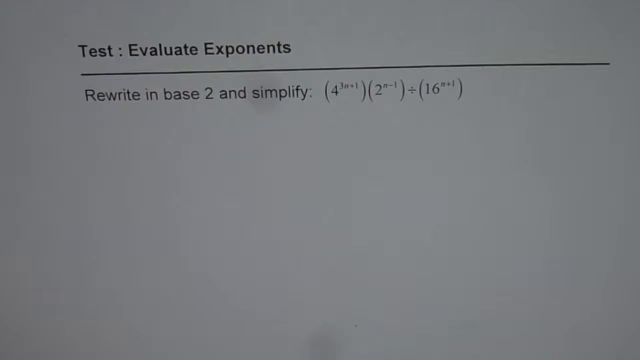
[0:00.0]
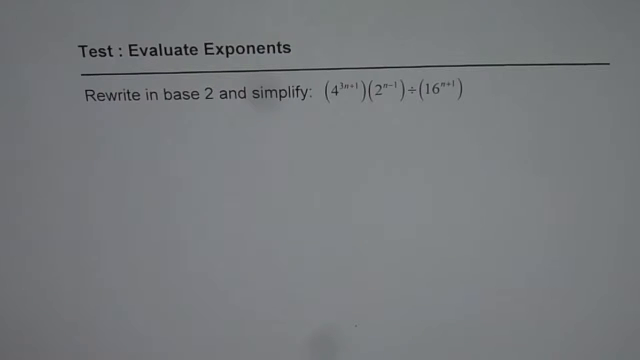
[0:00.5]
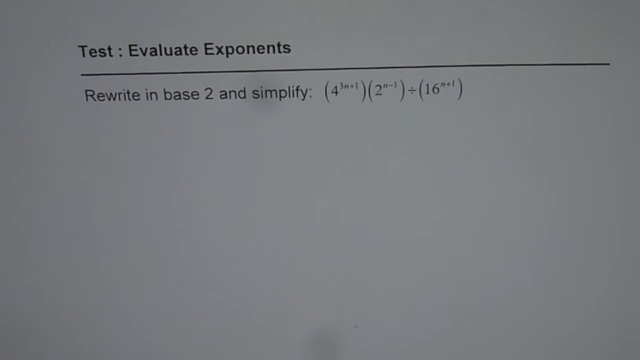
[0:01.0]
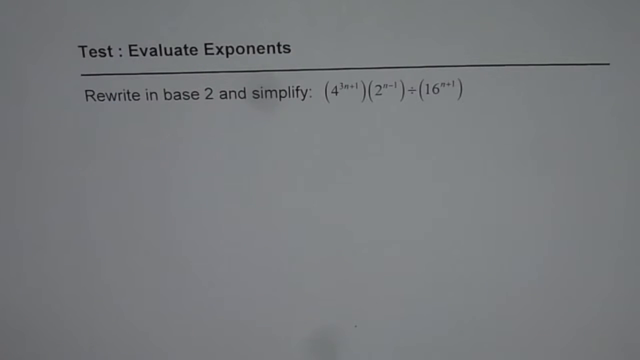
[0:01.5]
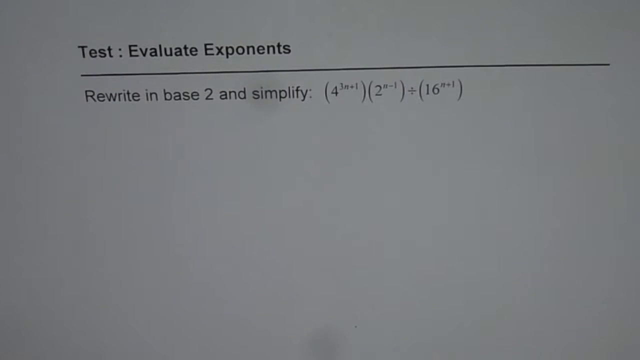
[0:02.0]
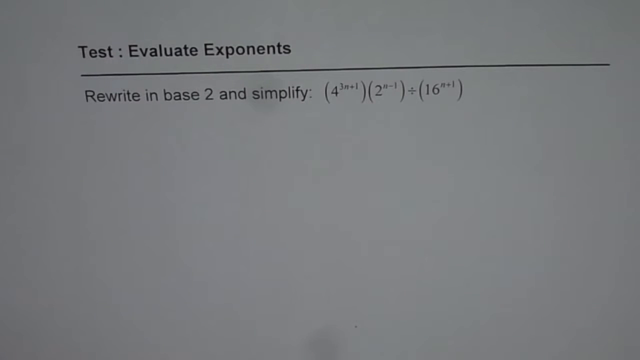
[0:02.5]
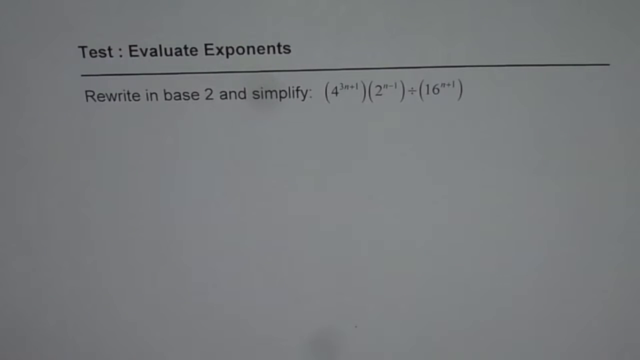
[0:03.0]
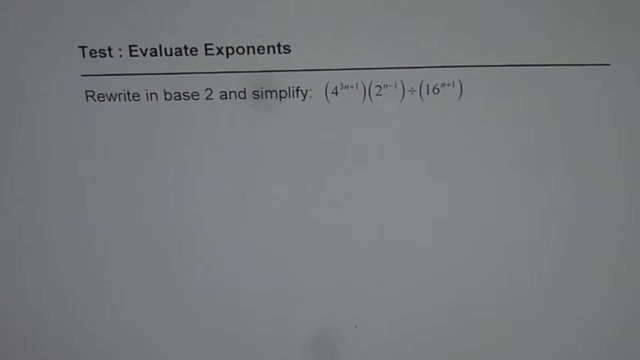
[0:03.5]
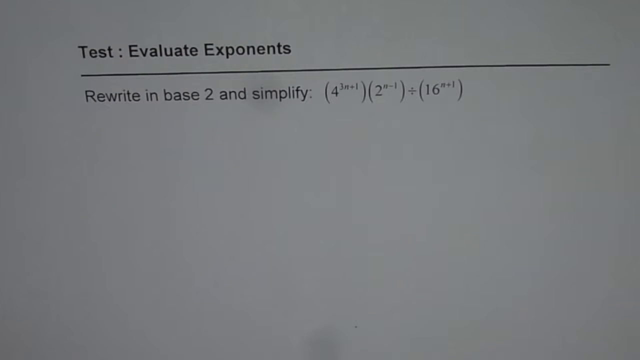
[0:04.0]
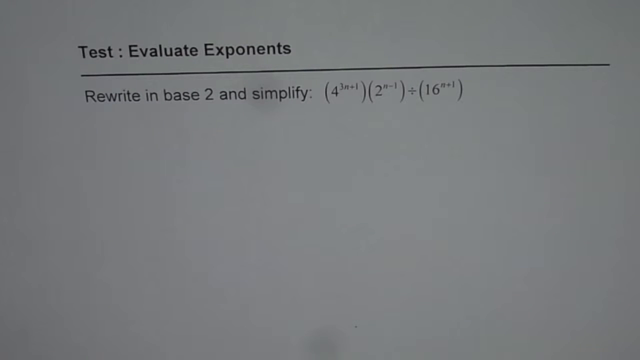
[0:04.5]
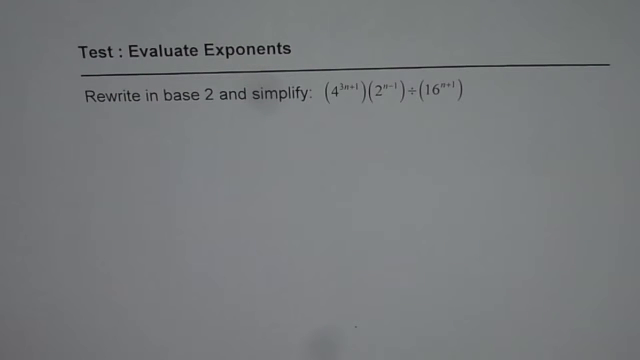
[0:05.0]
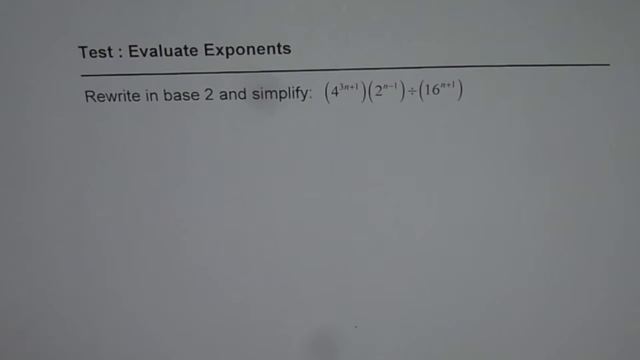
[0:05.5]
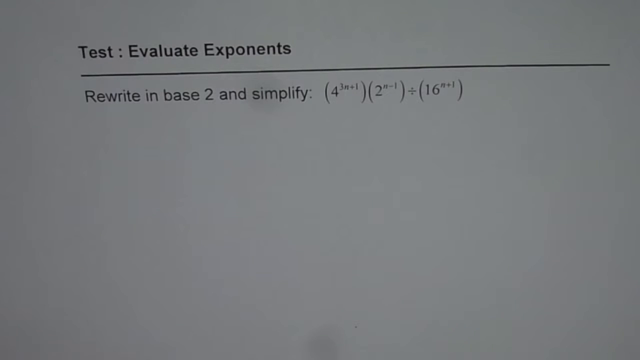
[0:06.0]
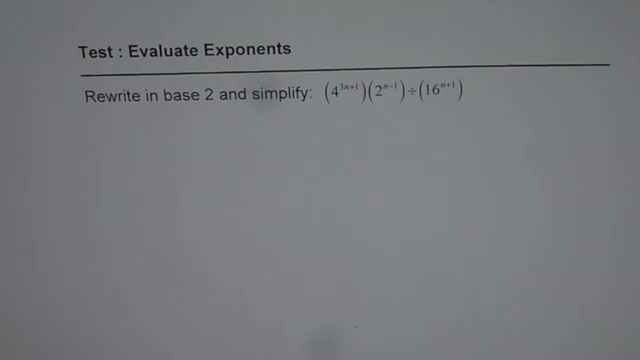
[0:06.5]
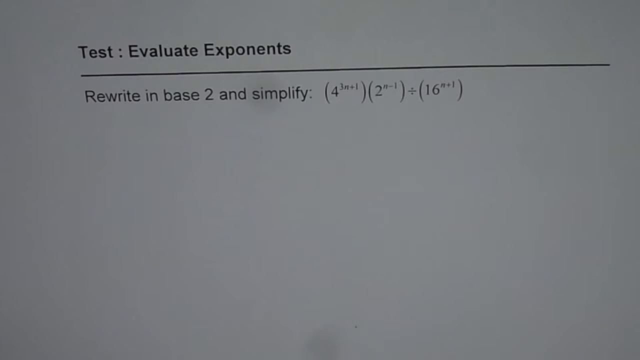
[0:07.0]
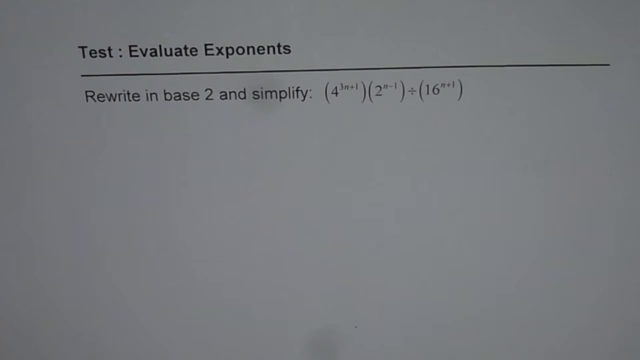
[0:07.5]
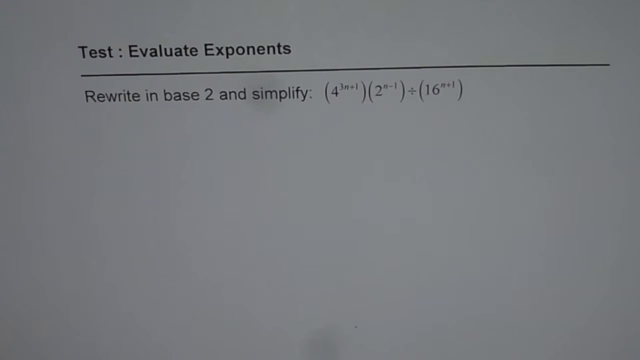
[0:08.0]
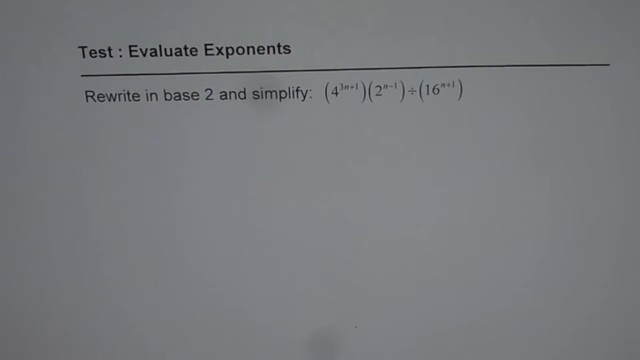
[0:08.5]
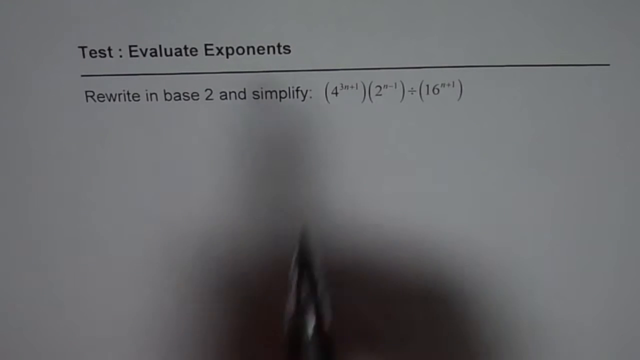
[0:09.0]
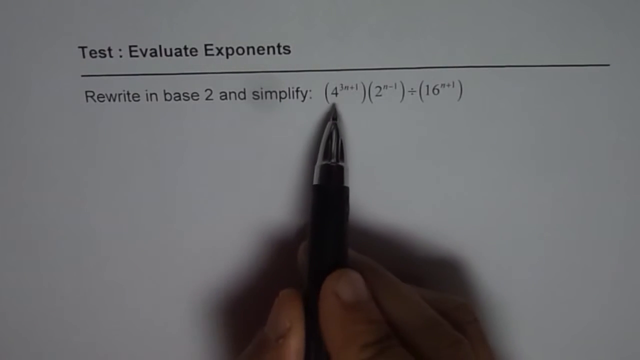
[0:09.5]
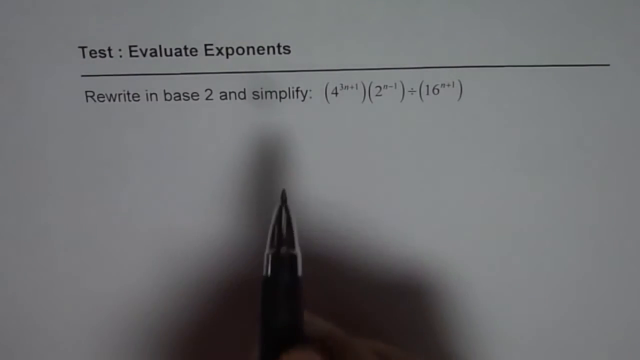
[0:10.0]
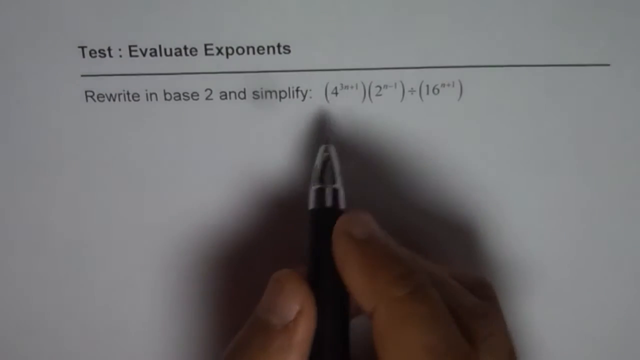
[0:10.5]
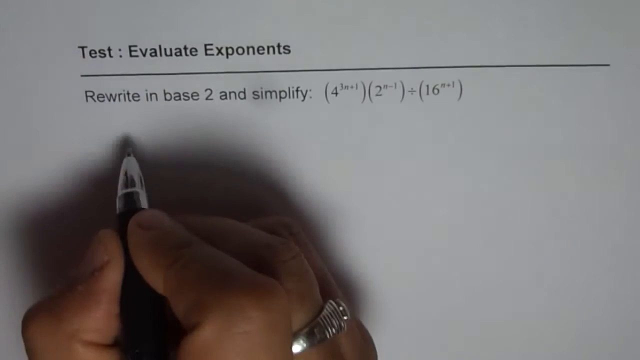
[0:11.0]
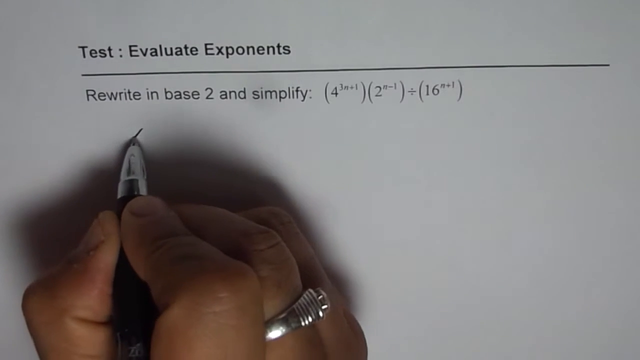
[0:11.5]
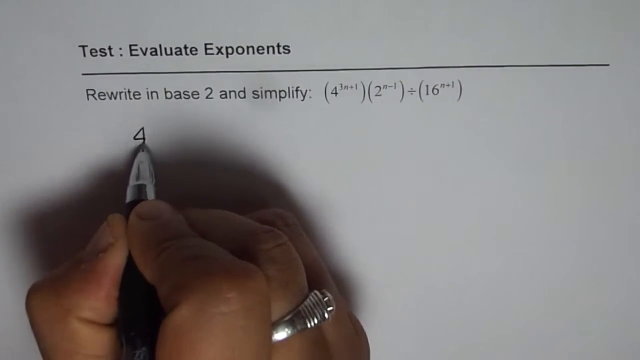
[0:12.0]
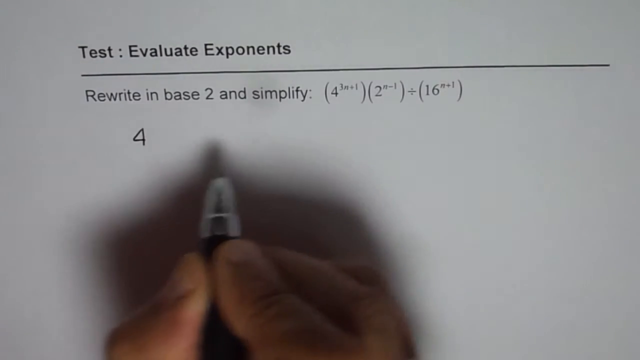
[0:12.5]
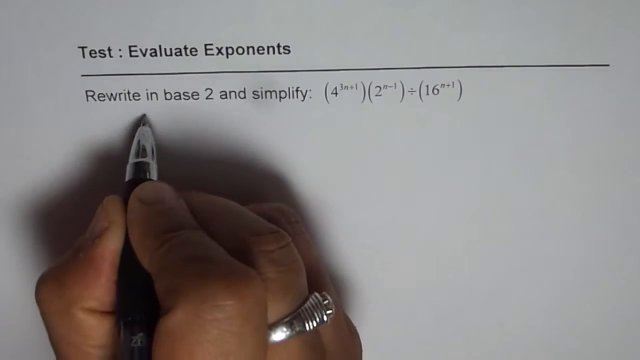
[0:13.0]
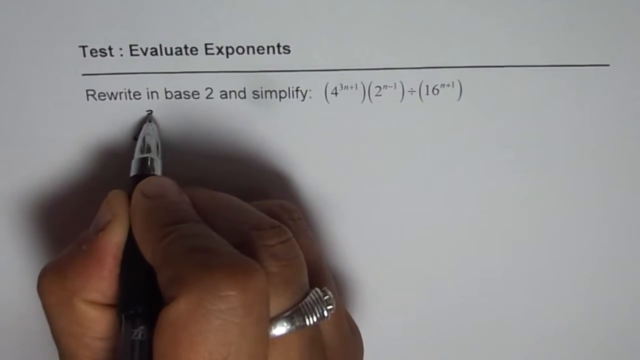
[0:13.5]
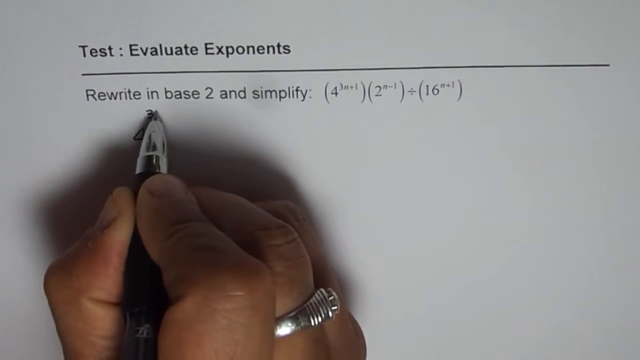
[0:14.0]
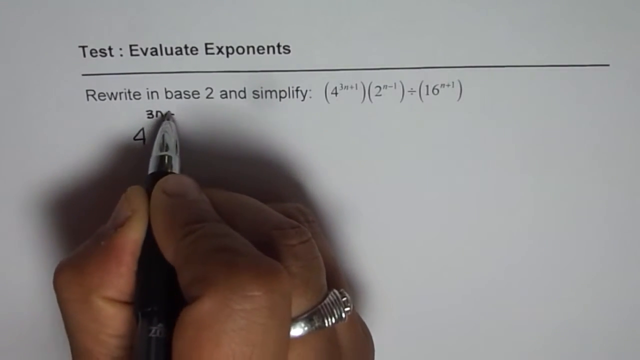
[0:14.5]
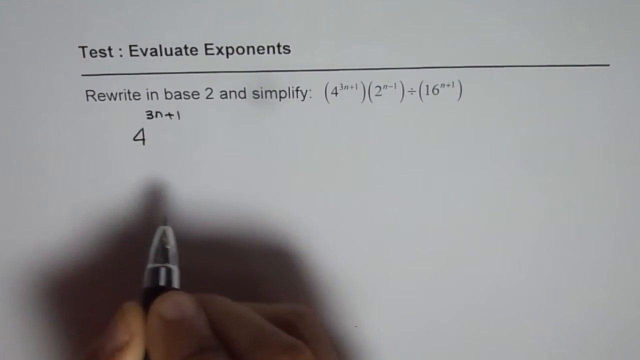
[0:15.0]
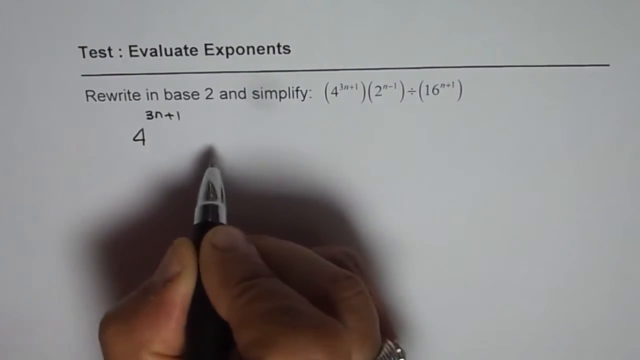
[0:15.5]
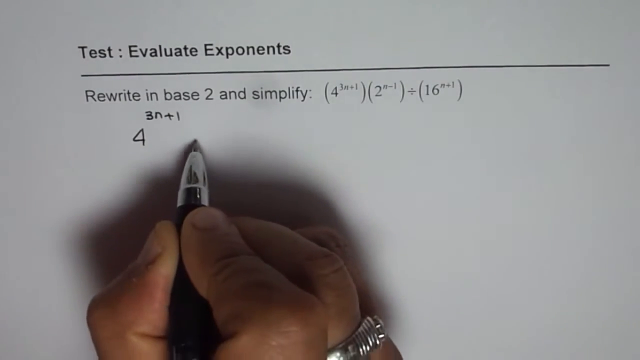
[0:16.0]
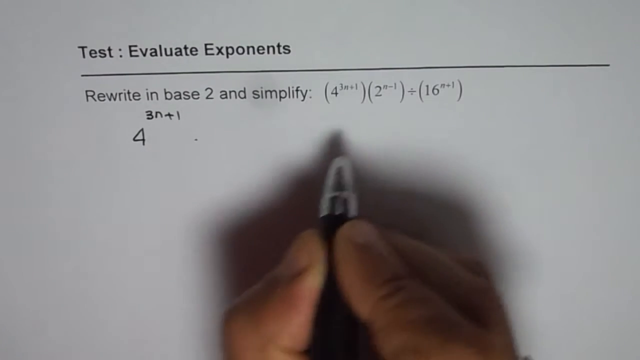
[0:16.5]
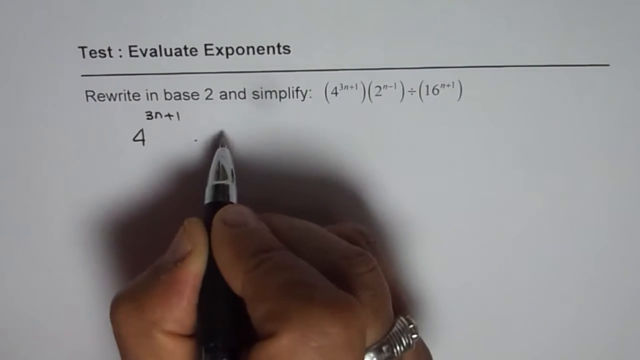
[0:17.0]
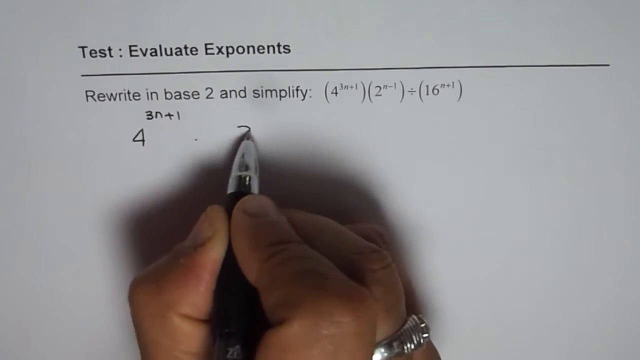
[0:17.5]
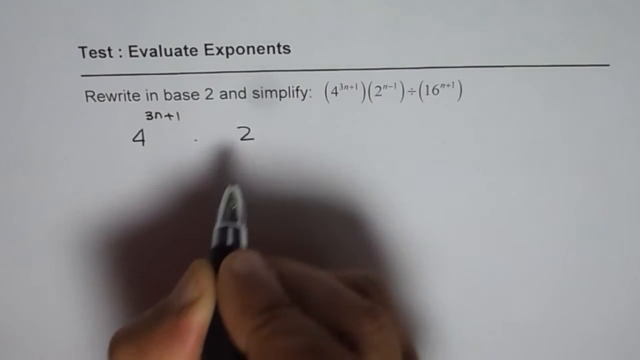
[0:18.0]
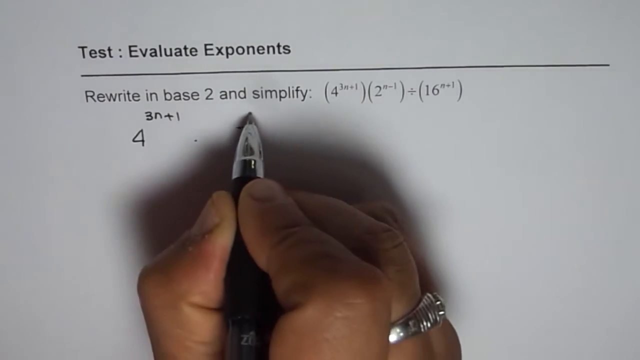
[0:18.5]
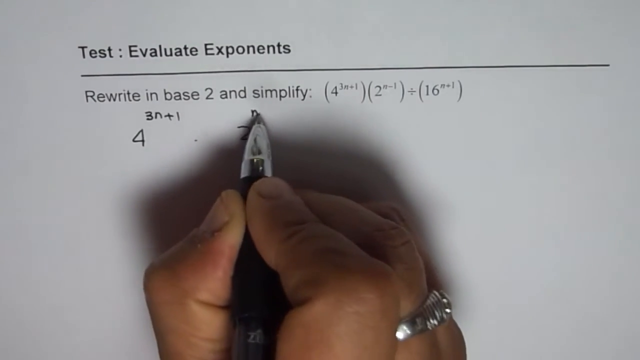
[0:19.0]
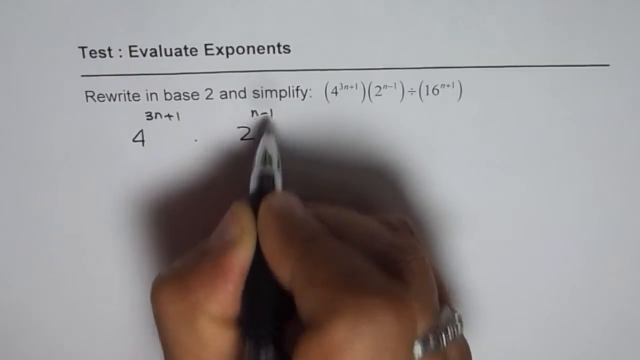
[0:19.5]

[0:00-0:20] A piece of paper has black text at the top that reads "test: evaluate exponents," with a line below it and, underneath, the words "rewrite in base two and simplify." An equation is to the right of that. A hand holding a black pen with a silver tip comes into view; the person has a ring on their middle finger. They write the number 4 on the left side of the page and put a 3 on top of it, with an n and a +1 next to it. They then write the number 2 with n − 1, point at the formula, and seem to be writing the formula down on the left side of the screen.